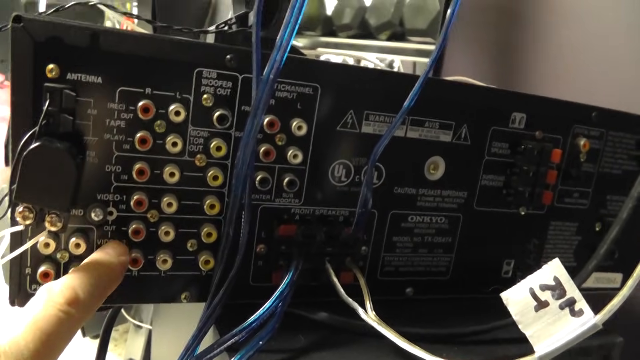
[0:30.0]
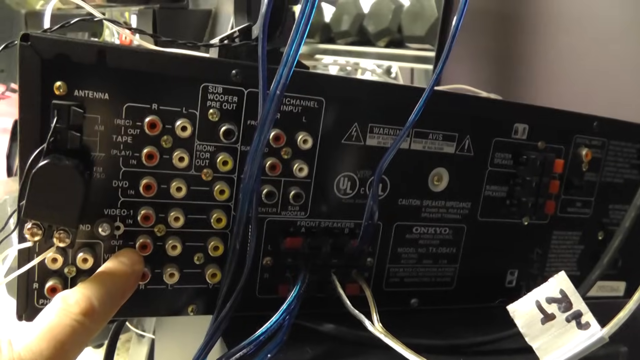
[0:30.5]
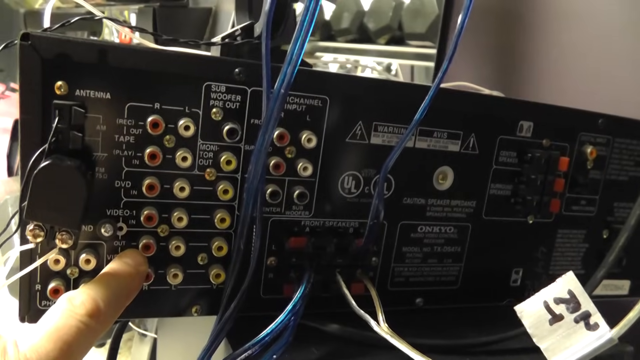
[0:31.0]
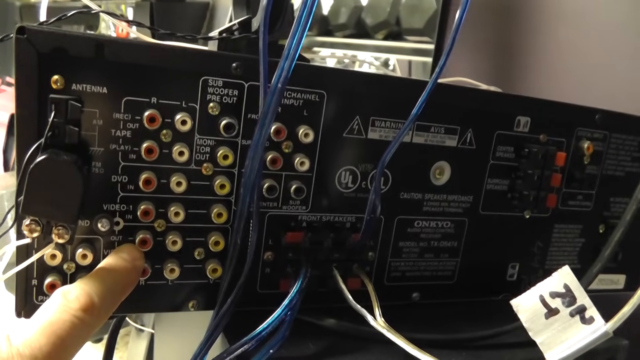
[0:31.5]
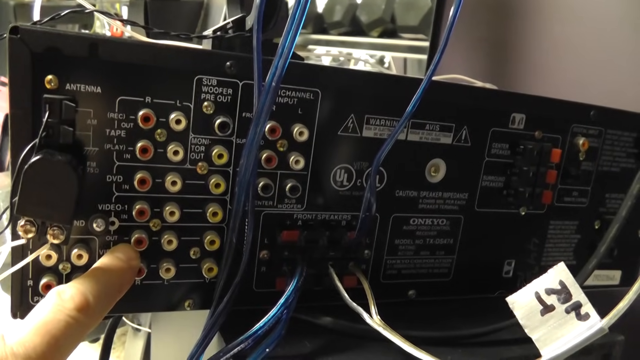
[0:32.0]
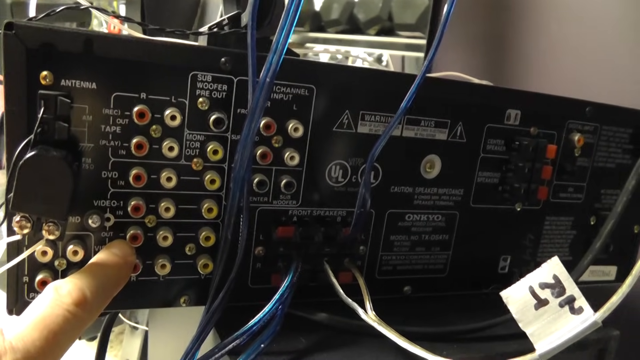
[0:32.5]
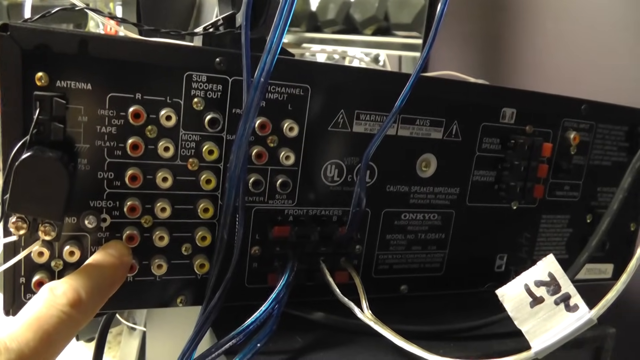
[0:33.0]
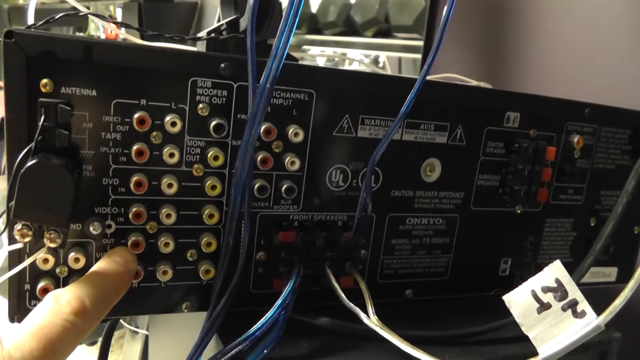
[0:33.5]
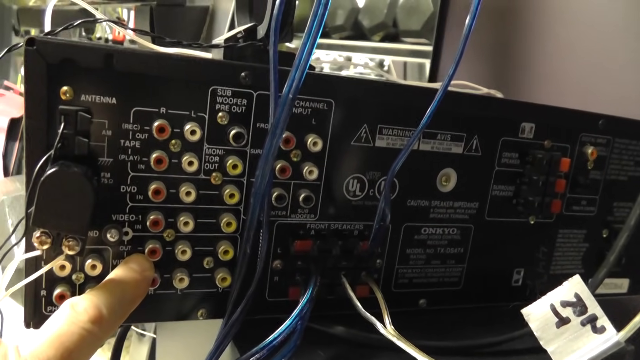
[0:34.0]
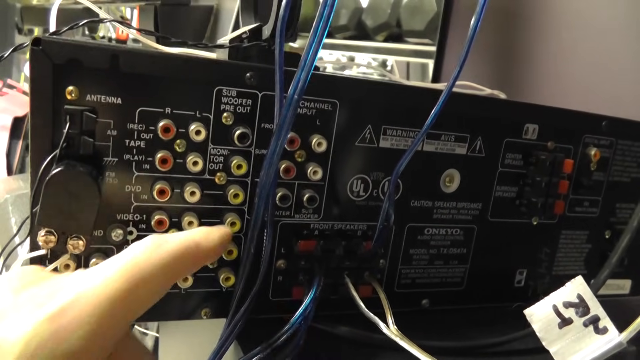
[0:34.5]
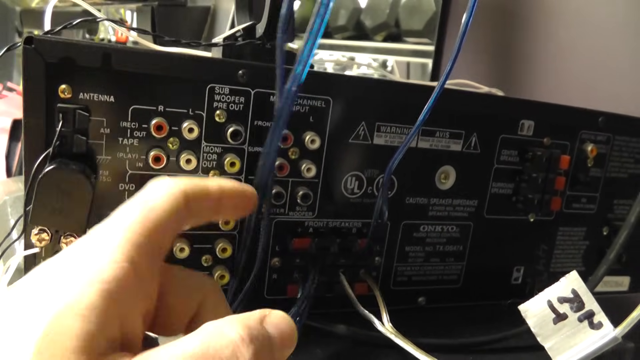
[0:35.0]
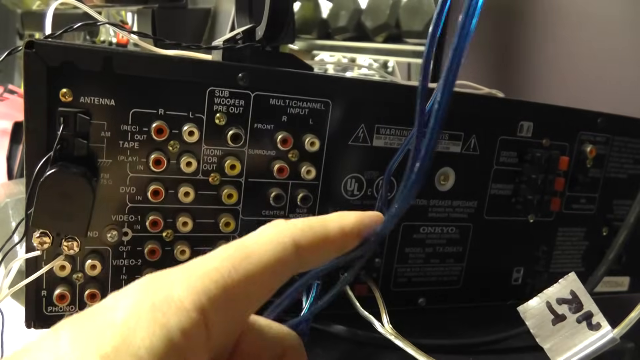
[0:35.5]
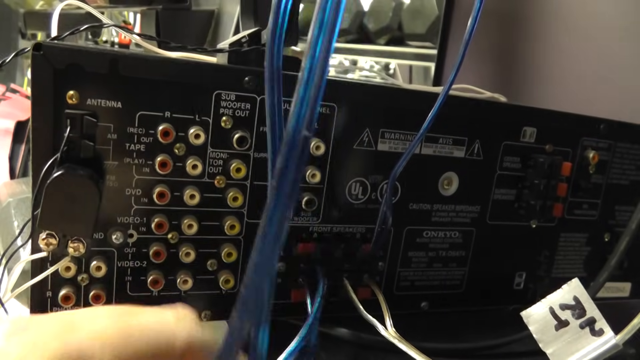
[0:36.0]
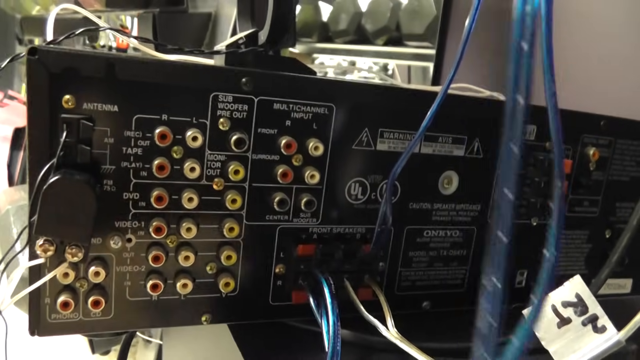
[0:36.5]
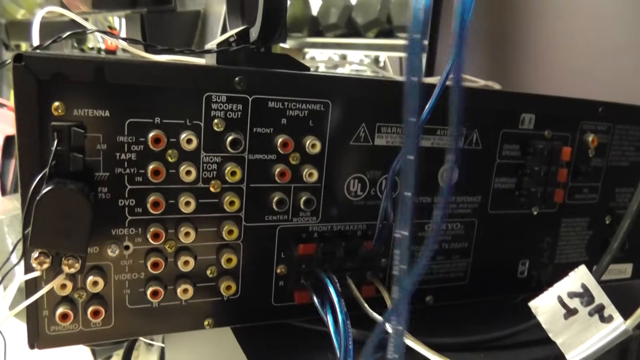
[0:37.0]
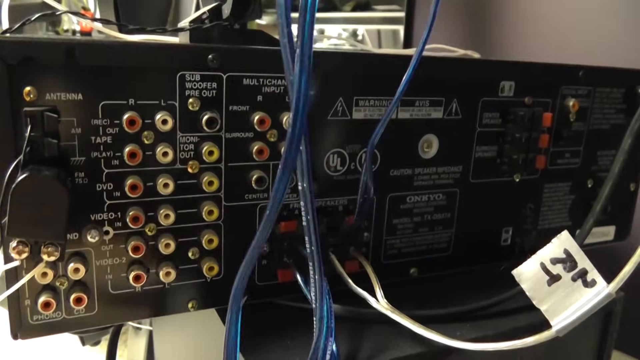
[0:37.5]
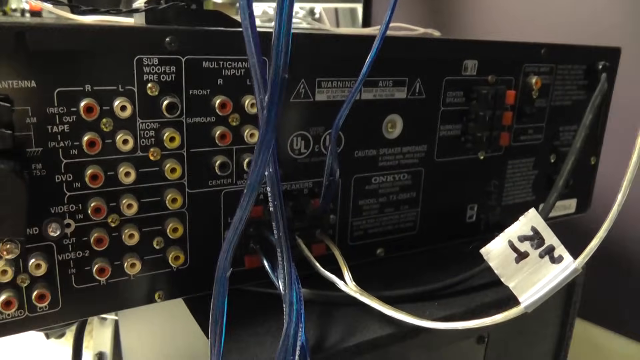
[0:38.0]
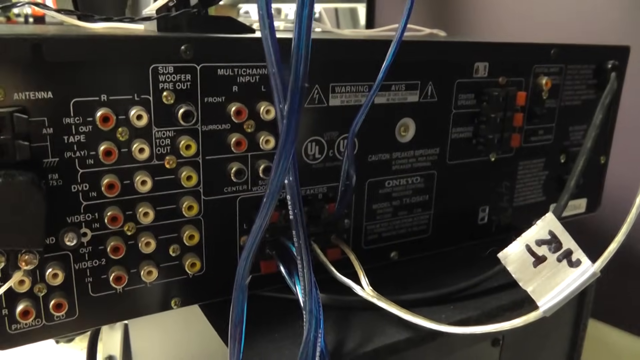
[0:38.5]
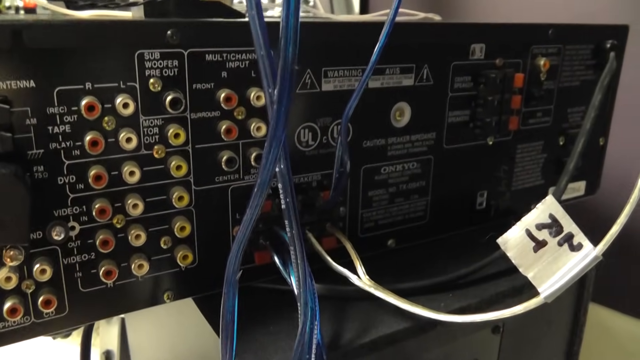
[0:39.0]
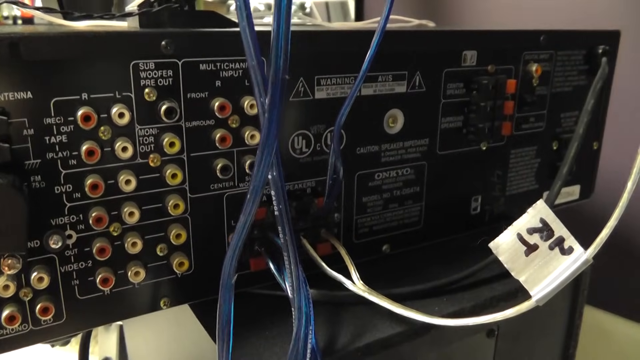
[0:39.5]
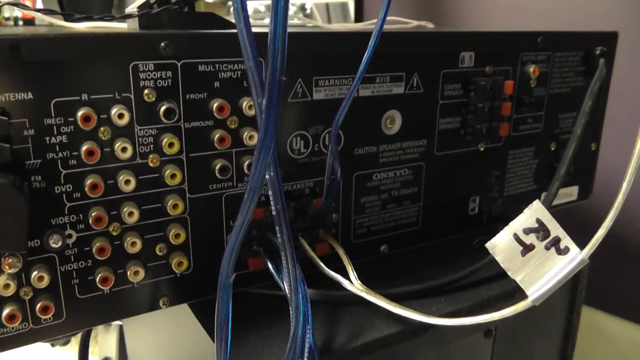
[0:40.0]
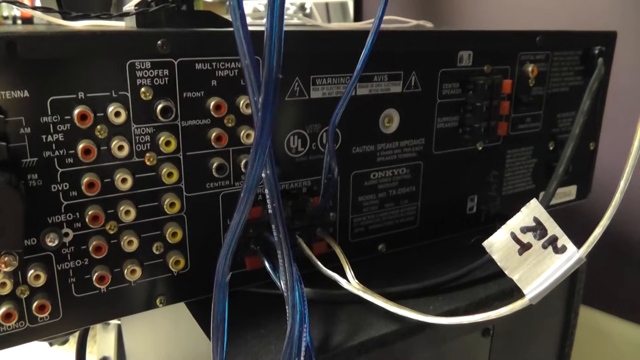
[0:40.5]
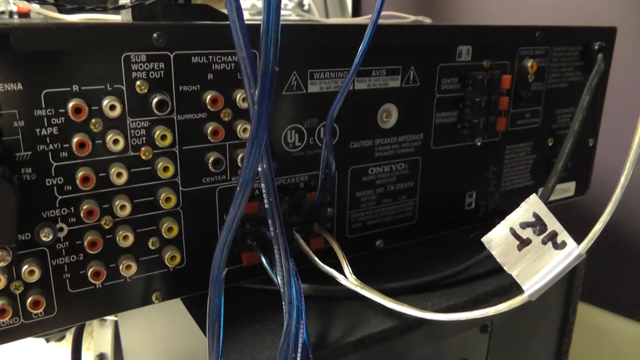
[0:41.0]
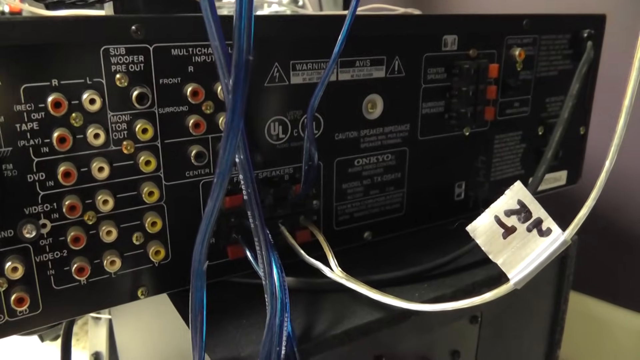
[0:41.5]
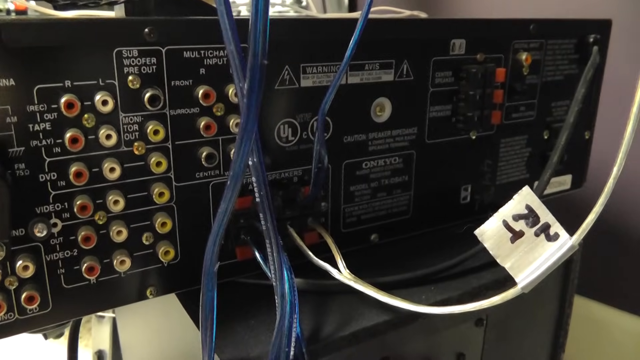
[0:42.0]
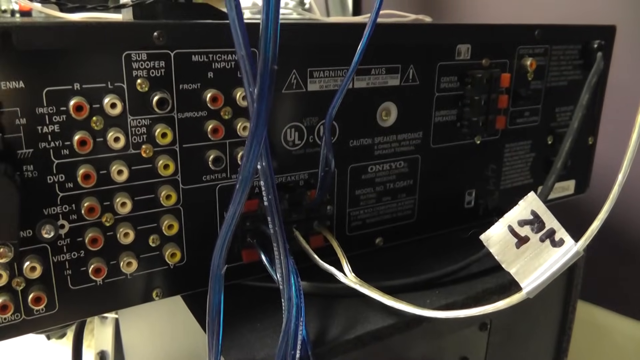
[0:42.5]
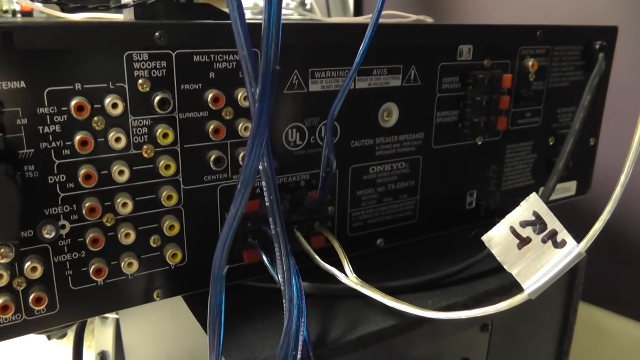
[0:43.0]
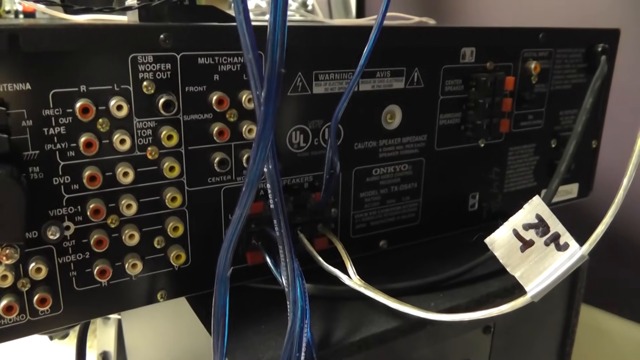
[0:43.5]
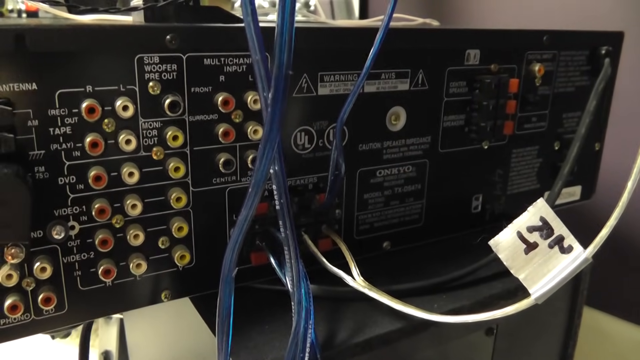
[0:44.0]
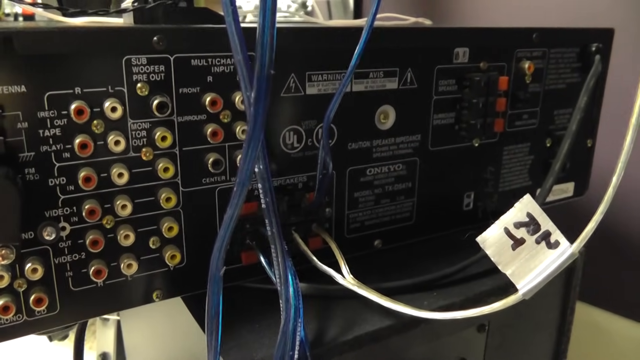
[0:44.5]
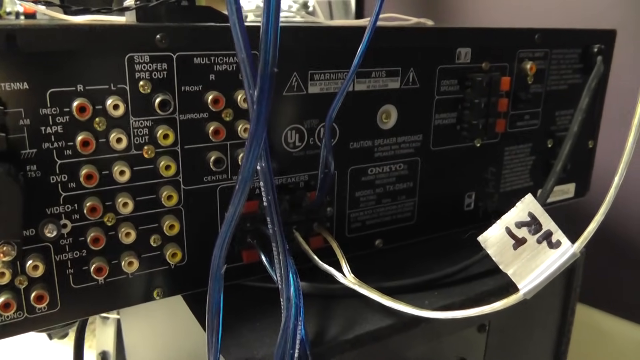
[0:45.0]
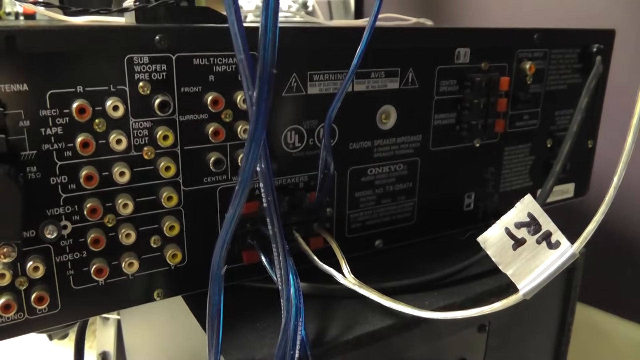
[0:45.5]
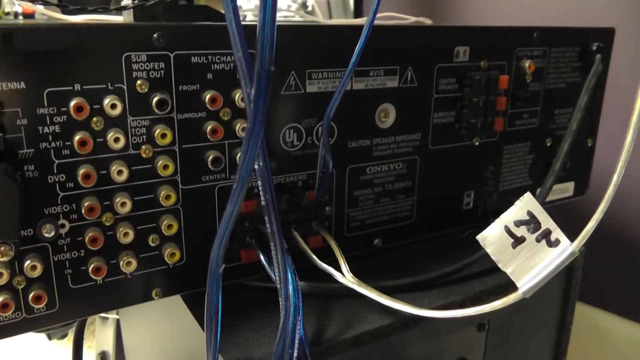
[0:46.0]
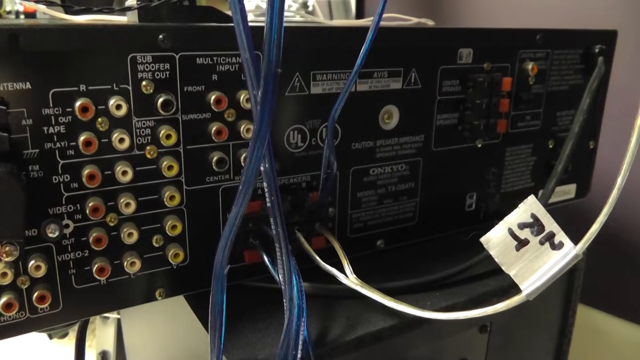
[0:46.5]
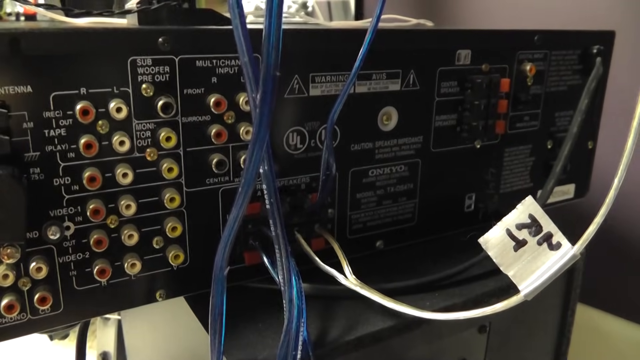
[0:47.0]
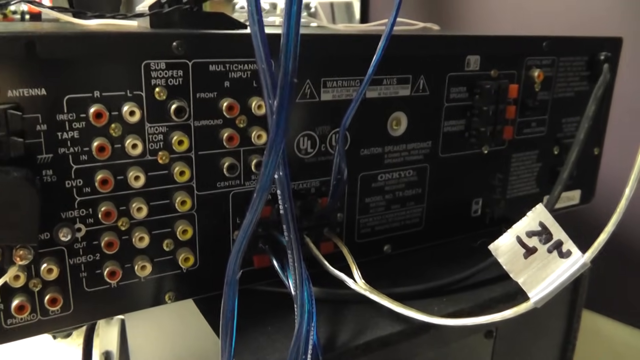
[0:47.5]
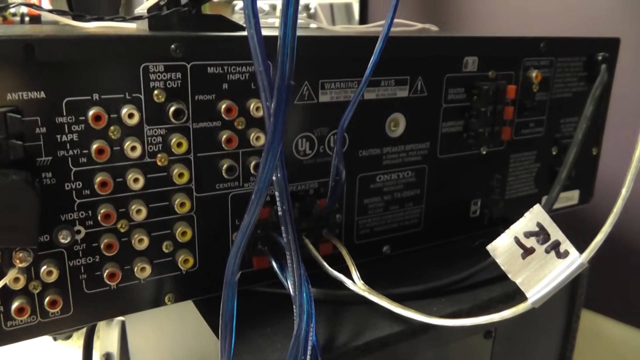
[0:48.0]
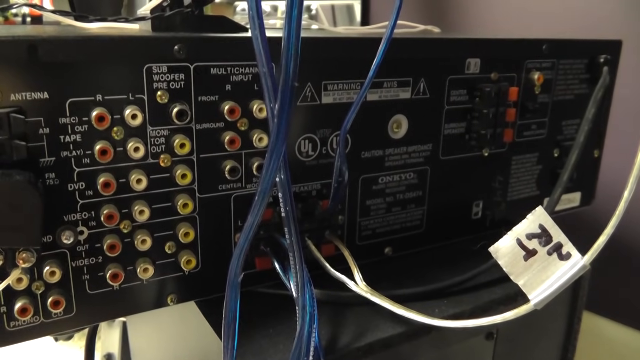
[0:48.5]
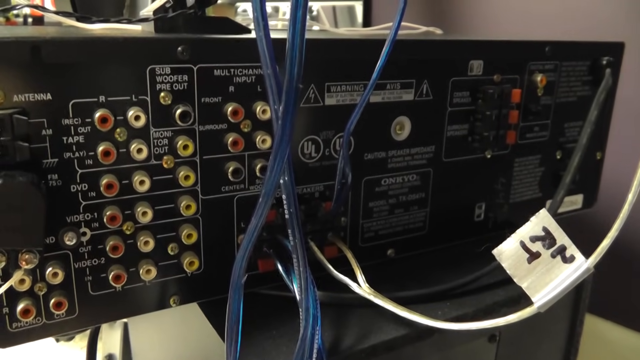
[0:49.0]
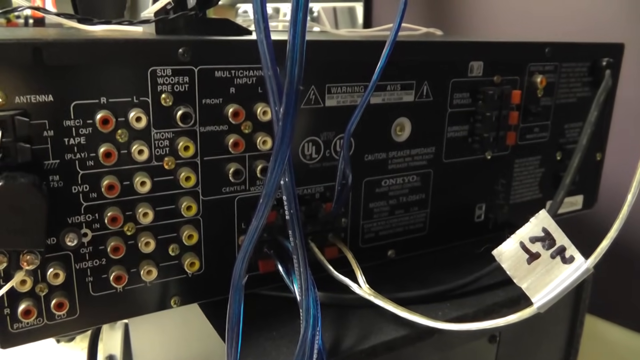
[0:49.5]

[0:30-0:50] The index finger of the left hand points specifically to the little red plug-ins. He has touched the blue cables and wiring and kind of pulled them down to the side. Behind them are more plug-ins: a red and white pair on top, another red and white pair underneath, and then two silver plug-ins. To the right is the lettering "UL" in a circle. Above that is a triangle with something like a lightning bolt in it, and there are two other panels: one looks like it says "warning", and the next is black at the top and silver at the bottom. There are small panels. Further right is another triangle that looks like it has a line going from the top down. Below that is another round circle that looks like something could be plugged into it. There is multiple small writing, including small writing in one box. While pointing to the cables and plug-ins, he moves the blue cable to the side.